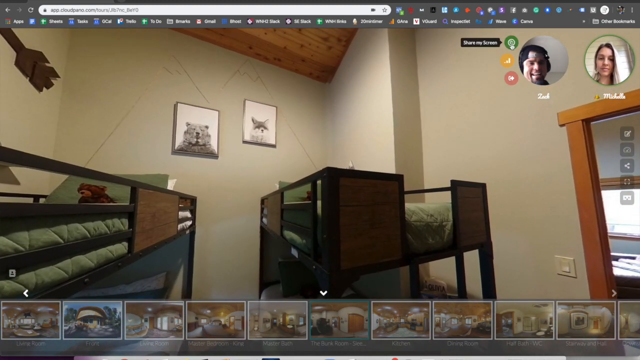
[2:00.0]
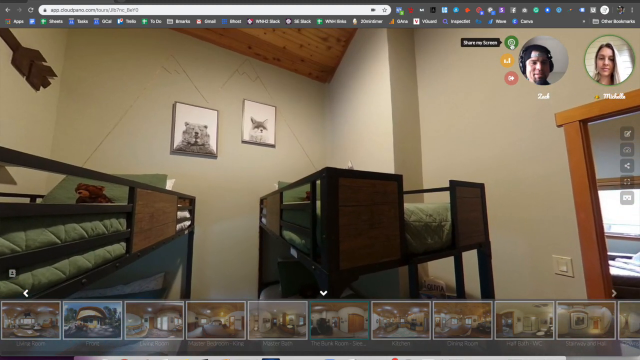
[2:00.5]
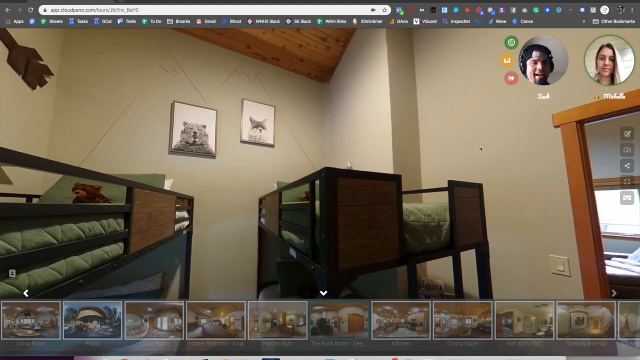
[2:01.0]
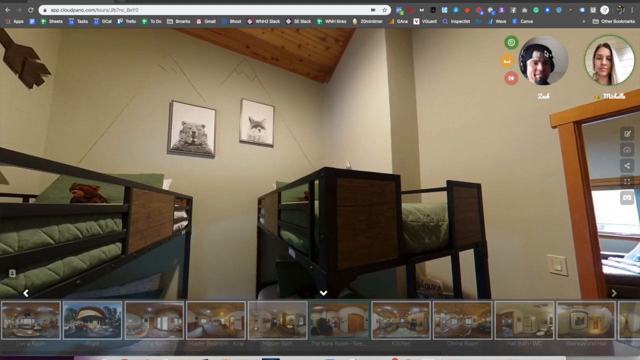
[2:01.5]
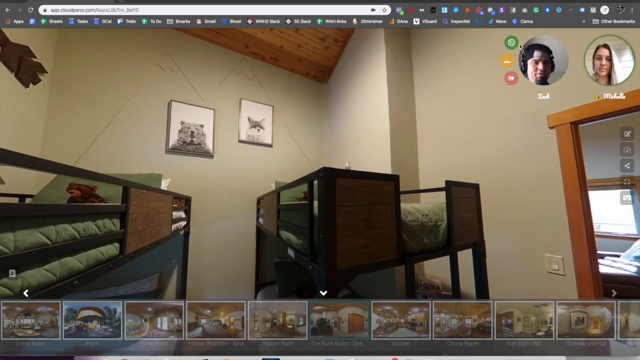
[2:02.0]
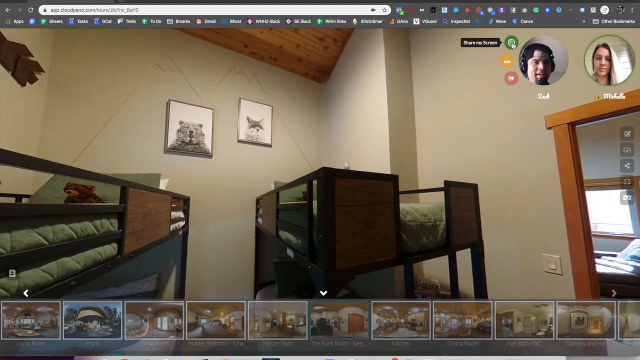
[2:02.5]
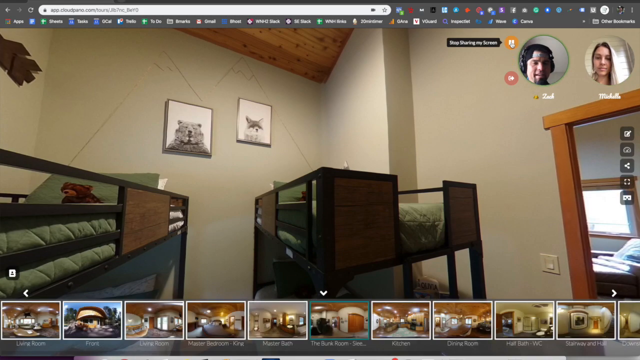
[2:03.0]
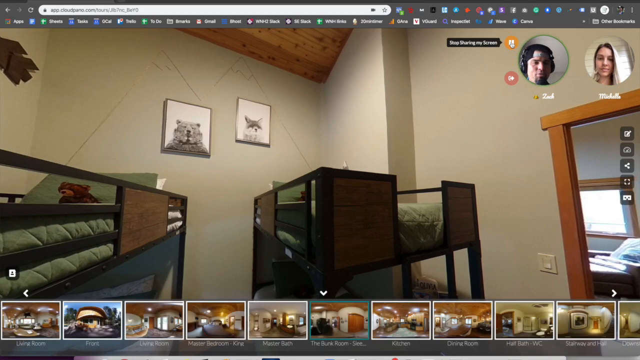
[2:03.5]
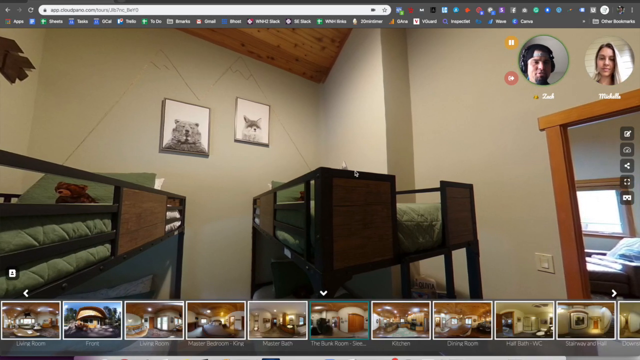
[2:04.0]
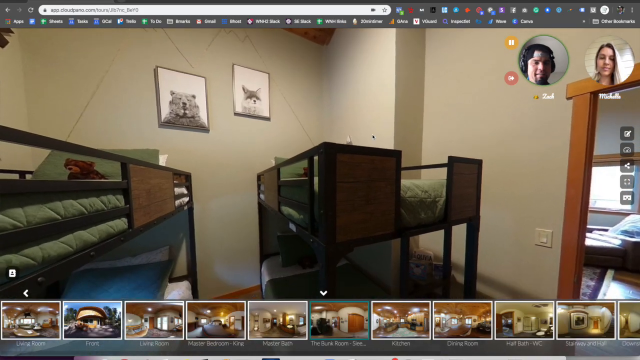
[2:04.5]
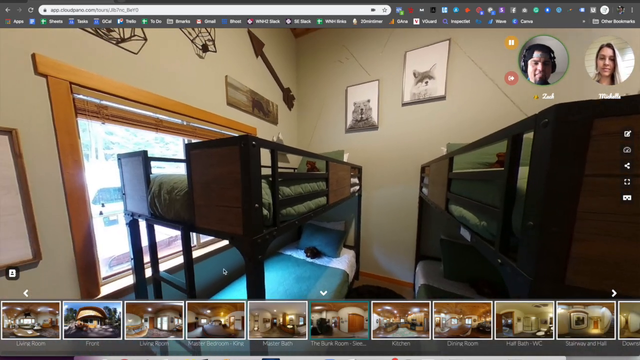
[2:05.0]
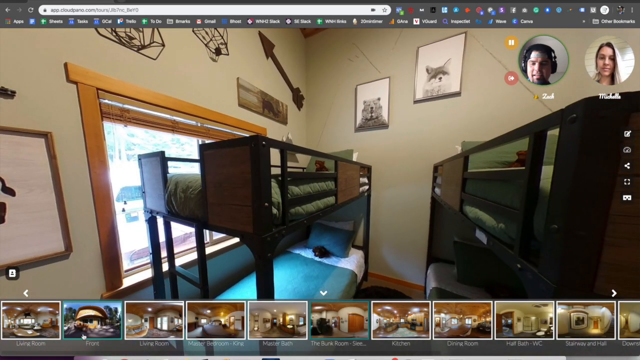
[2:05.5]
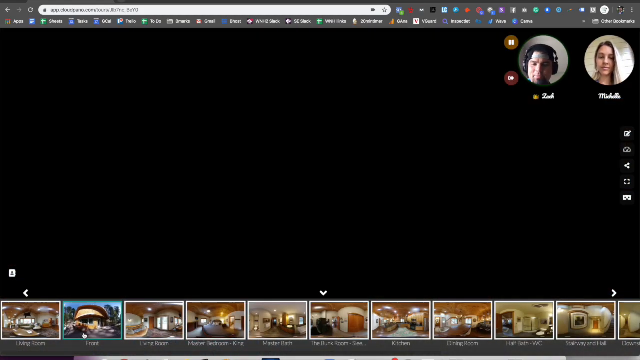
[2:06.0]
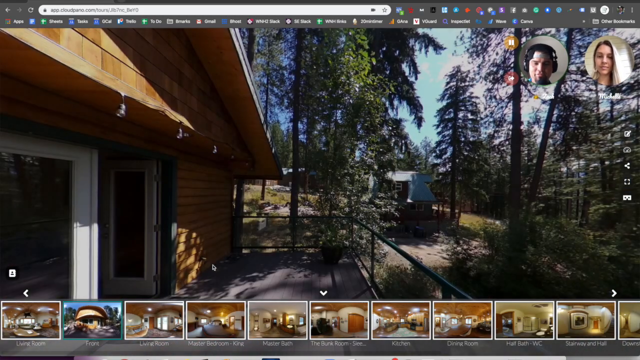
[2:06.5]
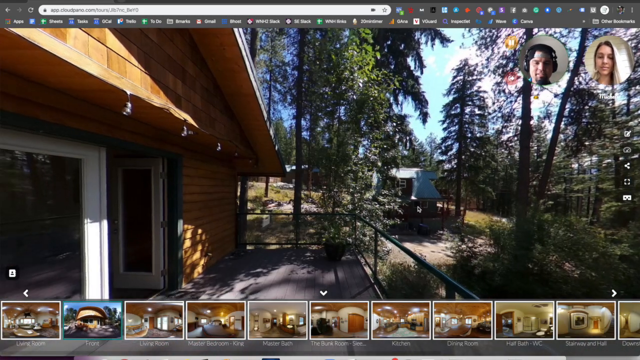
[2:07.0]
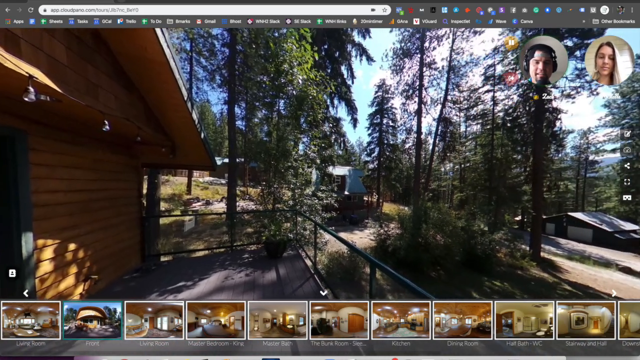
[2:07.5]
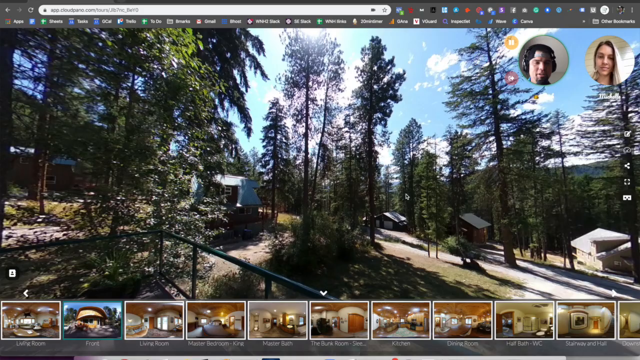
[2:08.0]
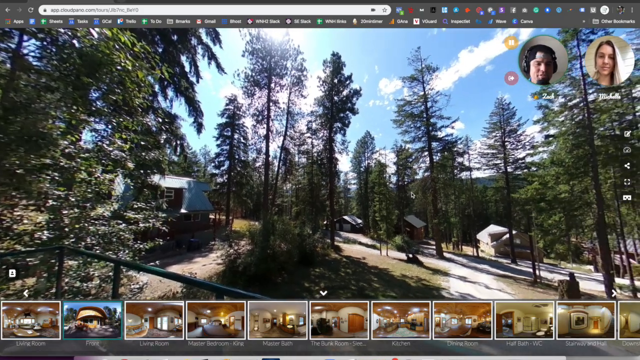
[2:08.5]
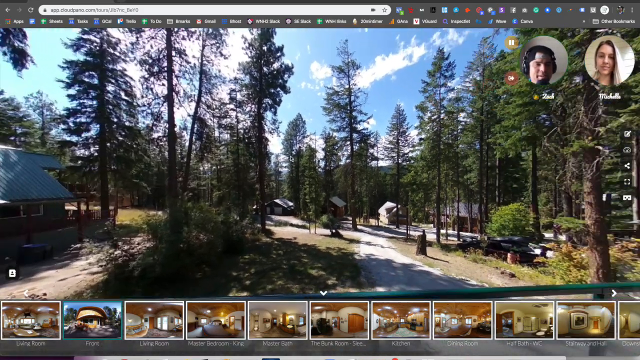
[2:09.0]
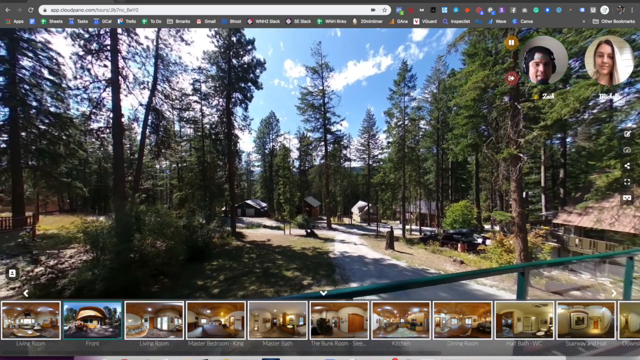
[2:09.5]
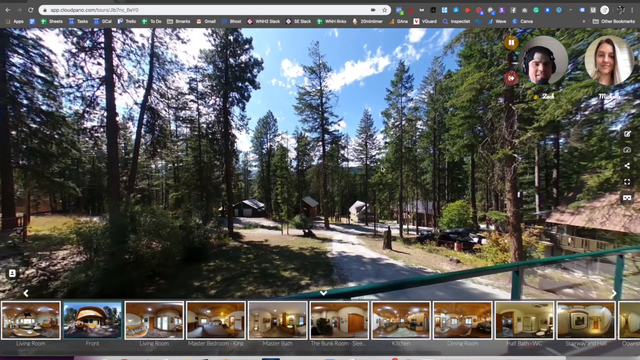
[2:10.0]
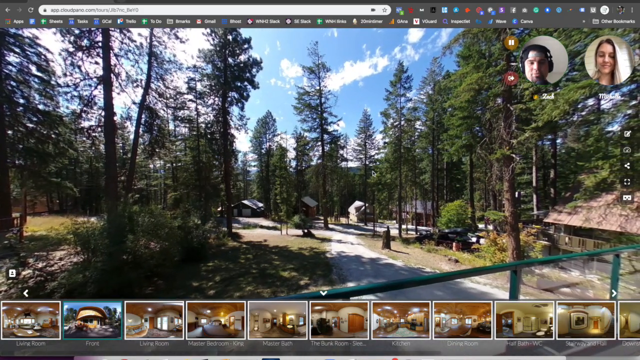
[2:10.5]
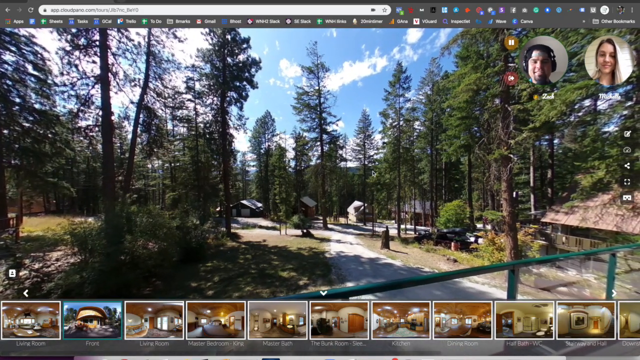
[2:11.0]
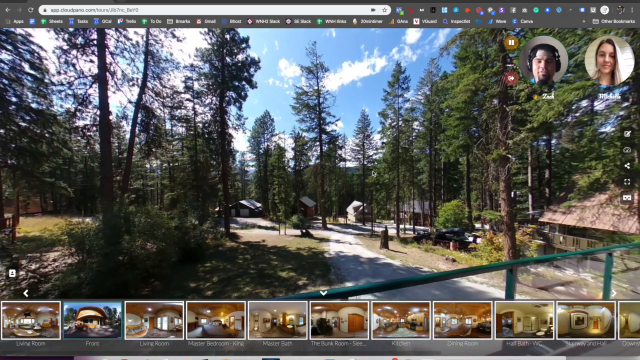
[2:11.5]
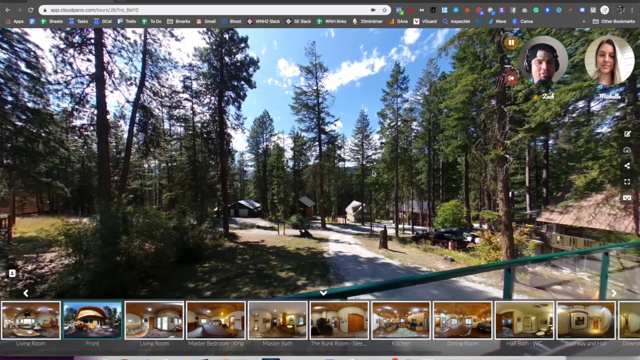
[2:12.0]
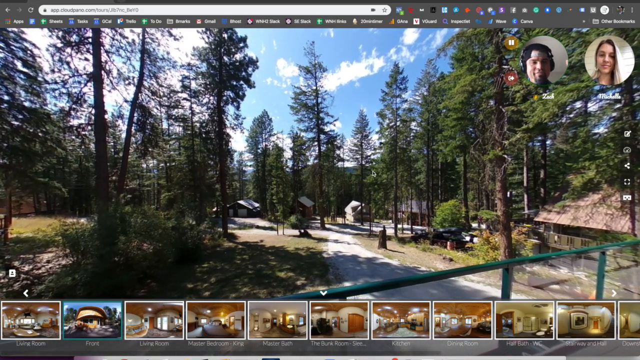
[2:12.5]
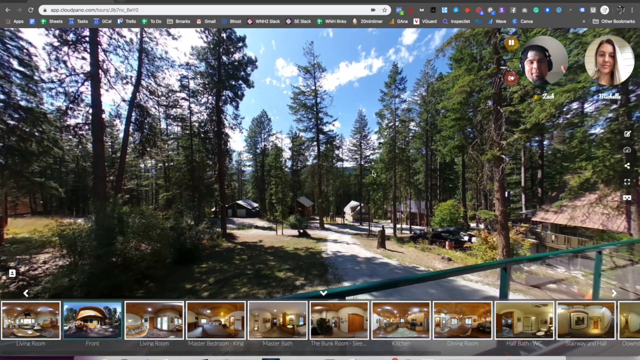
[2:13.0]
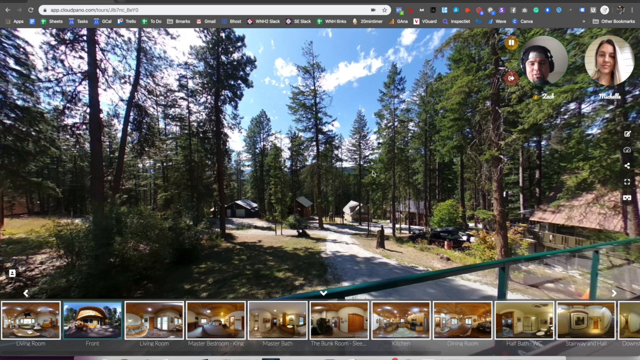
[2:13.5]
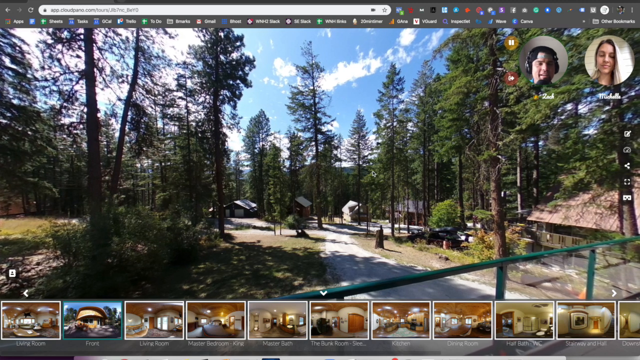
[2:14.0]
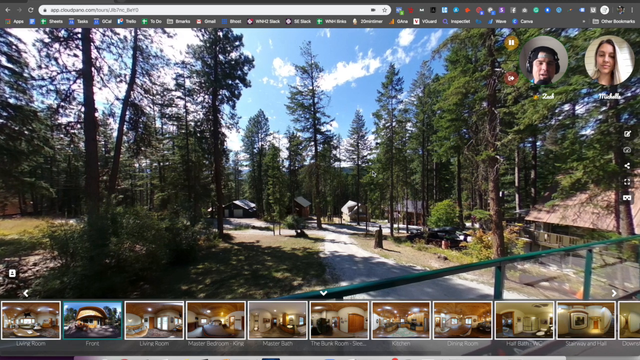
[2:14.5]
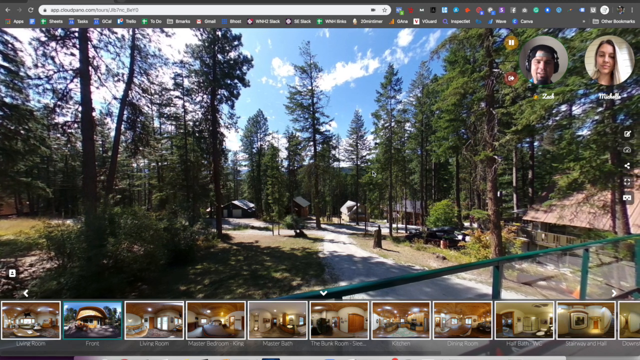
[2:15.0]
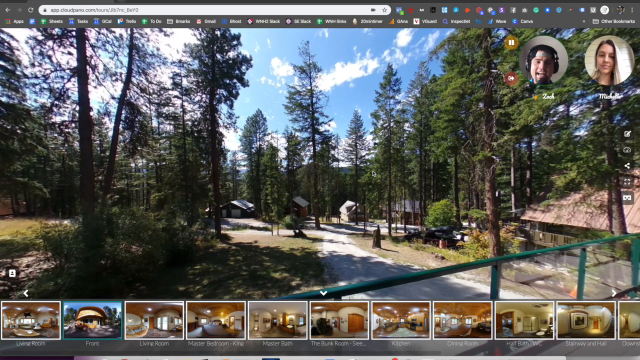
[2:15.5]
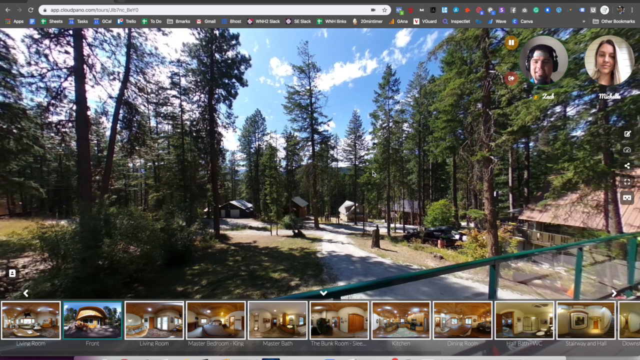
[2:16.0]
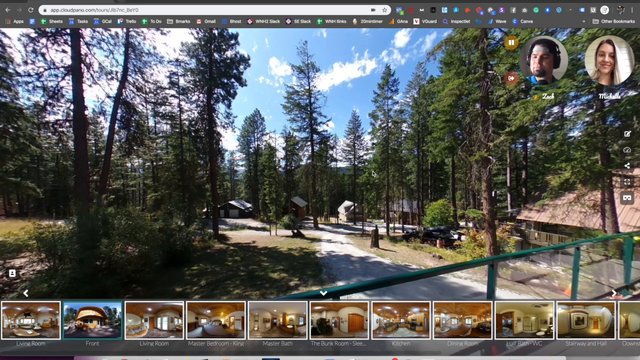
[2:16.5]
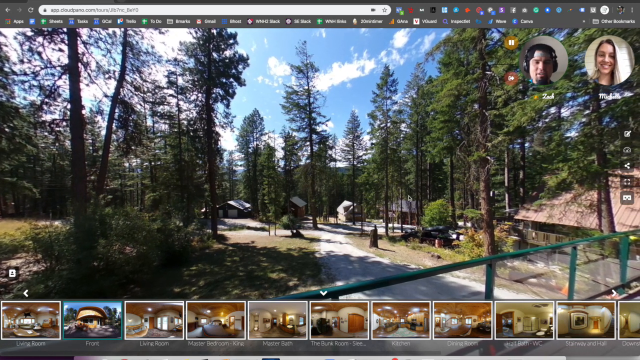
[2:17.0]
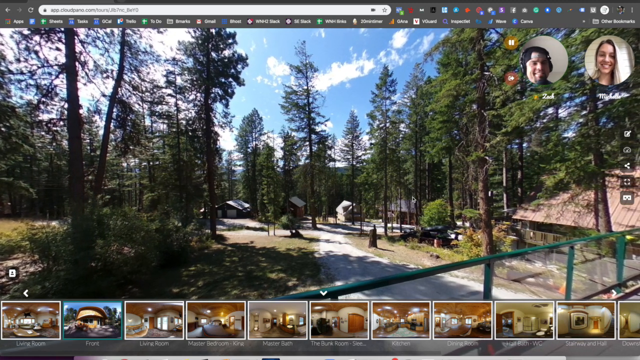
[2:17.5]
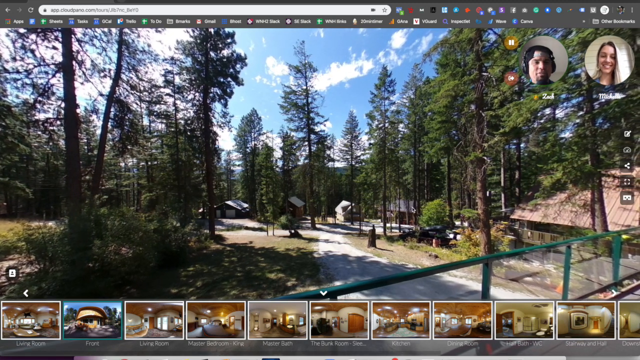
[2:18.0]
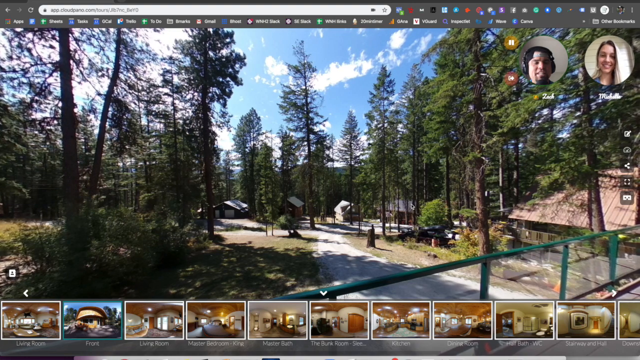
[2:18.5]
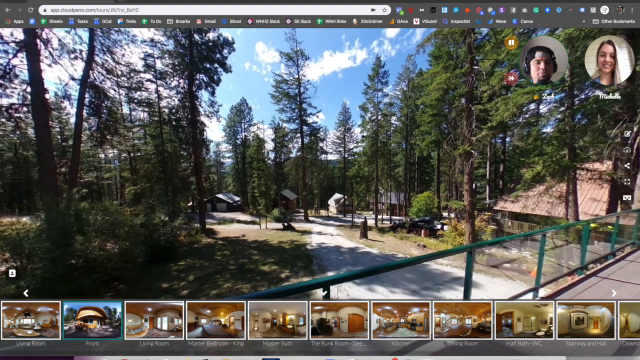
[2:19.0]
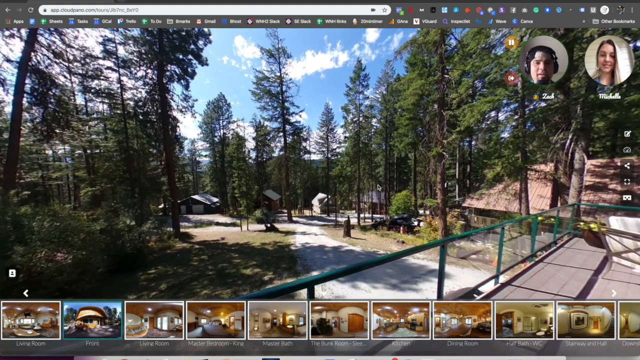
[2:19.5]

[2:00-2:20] A man named Zach and Michelle are playing a virtual reality game, their pictures in circles in the upper right-hand corner. They talk to each other and smile, their heads turning slightly and their mouths moving as they talk. The room shown has two sets of matching bunk beds with gray comforters, and there are some bear pictures and a fox picture on the back wall. Zach apparently takes the view outside, where there are some white areas that may be snow, lots of pine trees, and a blue sky with clouds toward the top. Back inside, all the doorways and the ceiling are covered with oak wood.